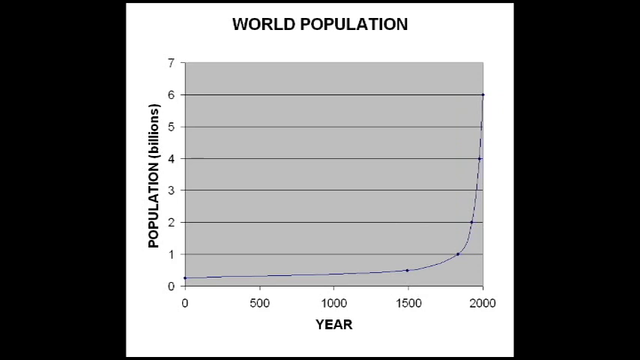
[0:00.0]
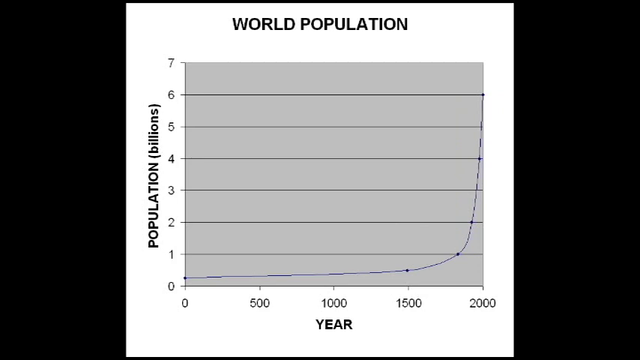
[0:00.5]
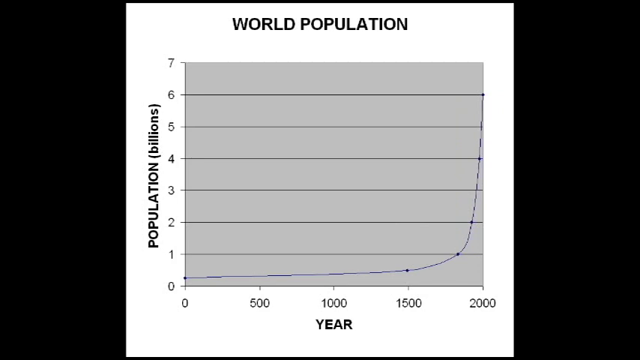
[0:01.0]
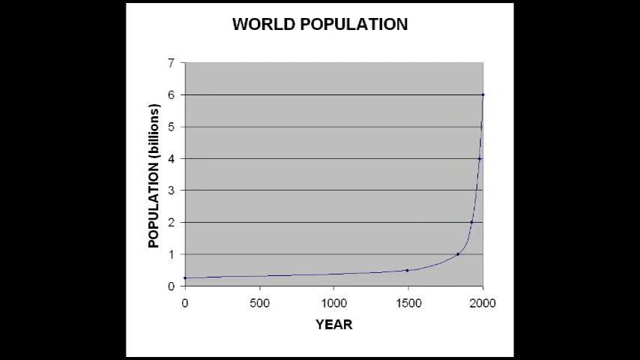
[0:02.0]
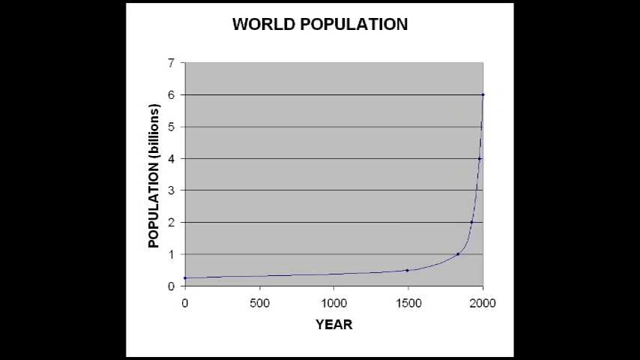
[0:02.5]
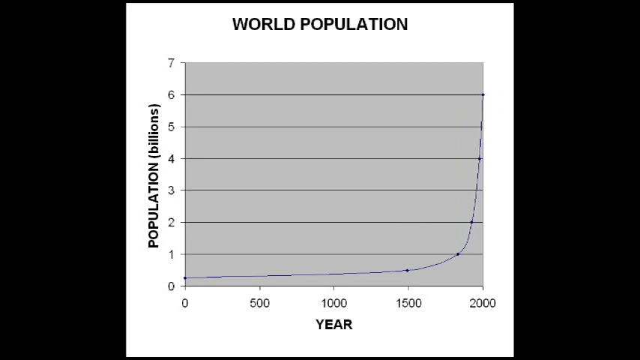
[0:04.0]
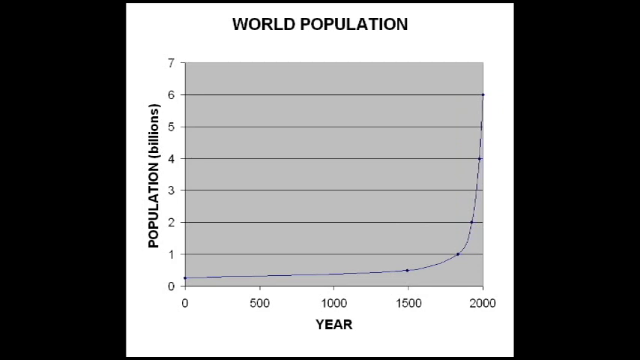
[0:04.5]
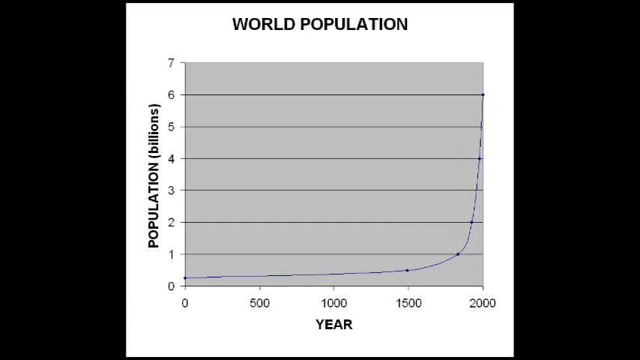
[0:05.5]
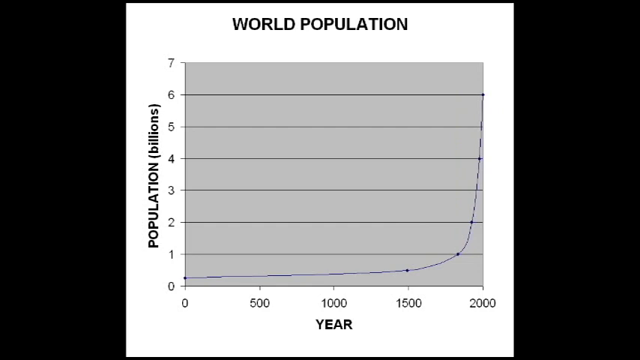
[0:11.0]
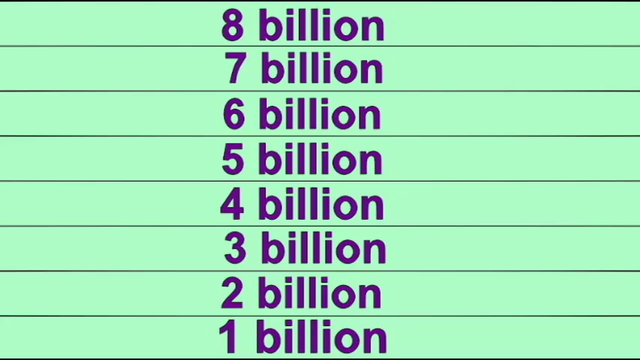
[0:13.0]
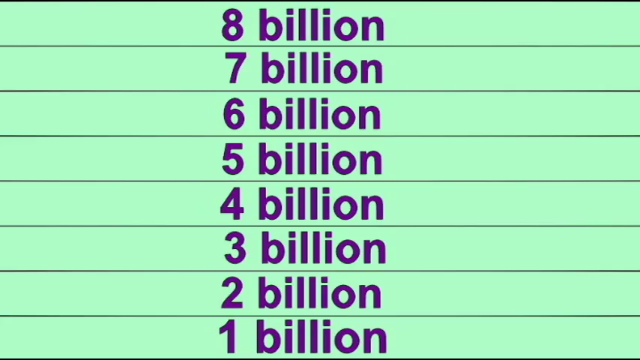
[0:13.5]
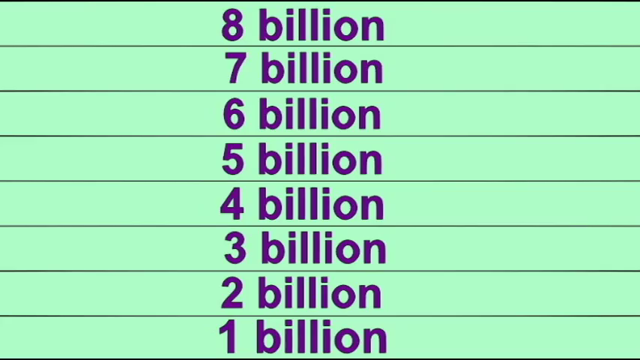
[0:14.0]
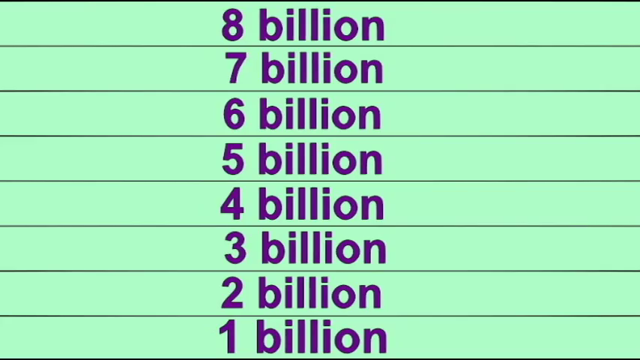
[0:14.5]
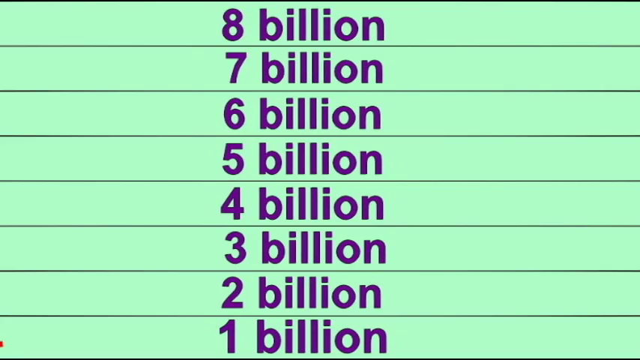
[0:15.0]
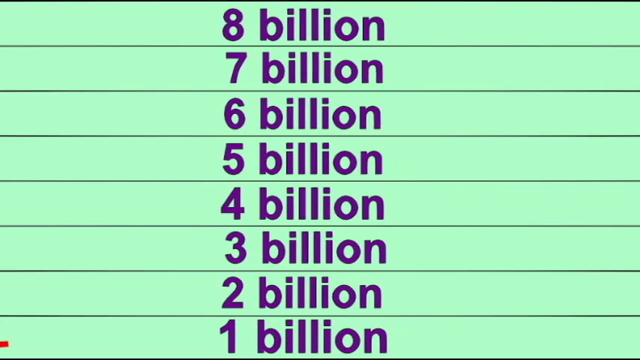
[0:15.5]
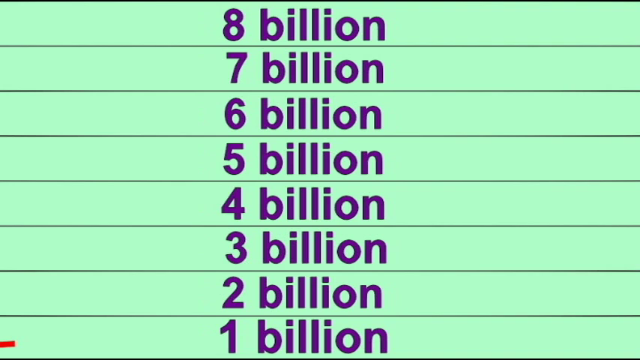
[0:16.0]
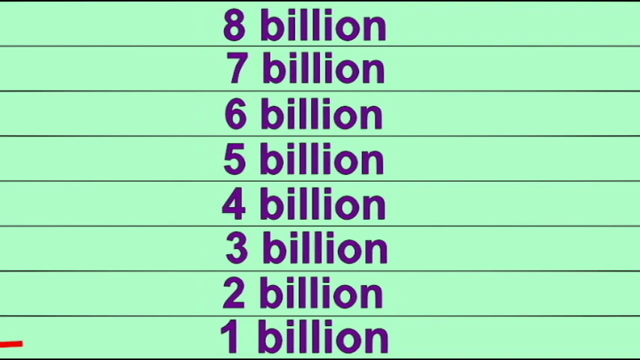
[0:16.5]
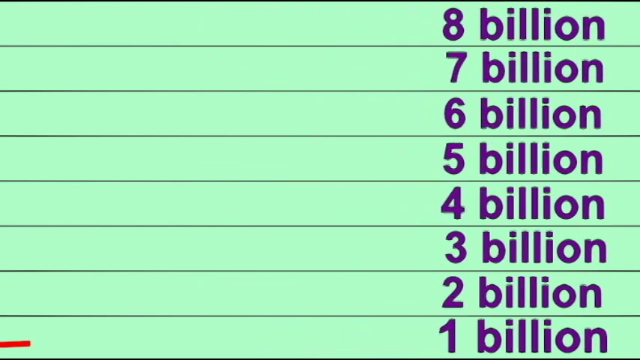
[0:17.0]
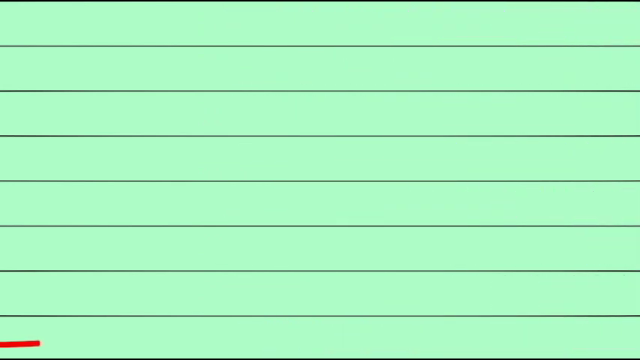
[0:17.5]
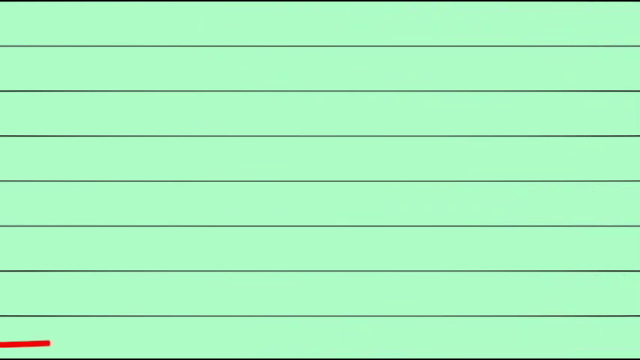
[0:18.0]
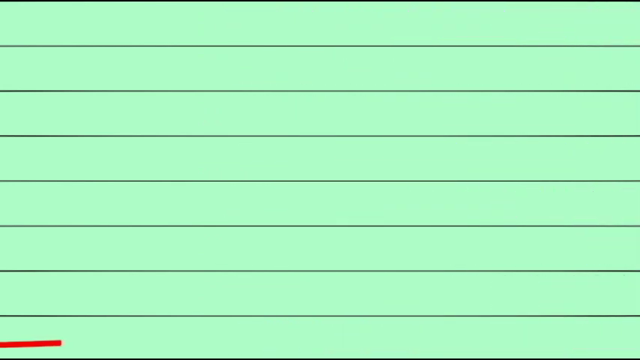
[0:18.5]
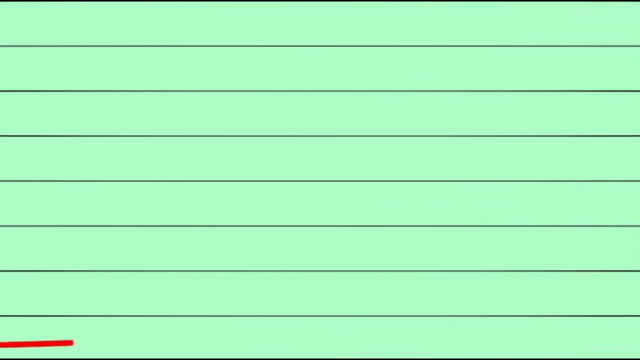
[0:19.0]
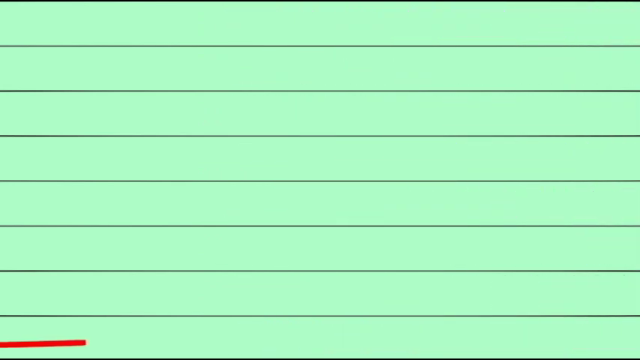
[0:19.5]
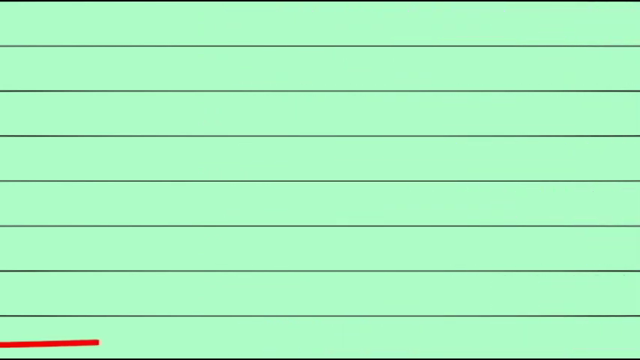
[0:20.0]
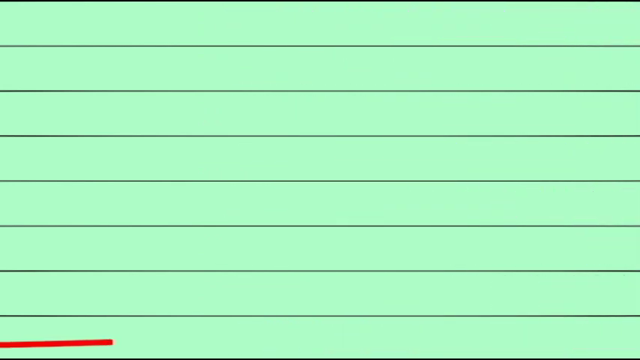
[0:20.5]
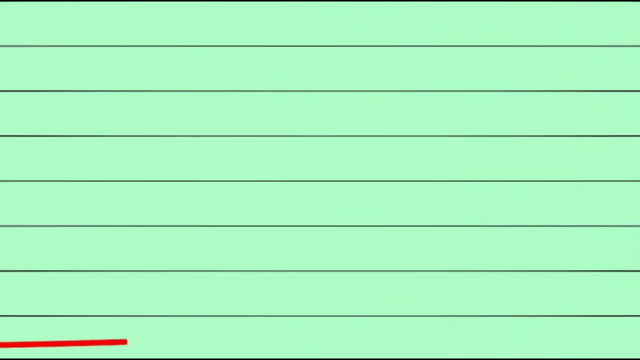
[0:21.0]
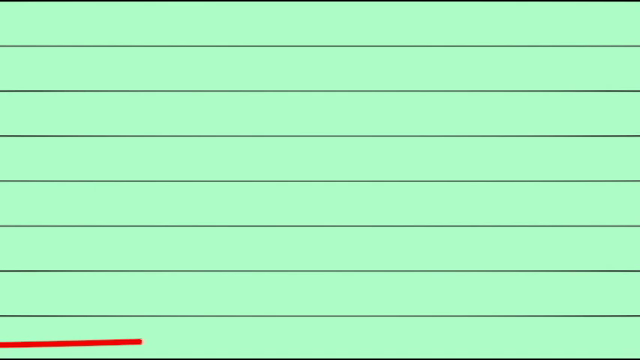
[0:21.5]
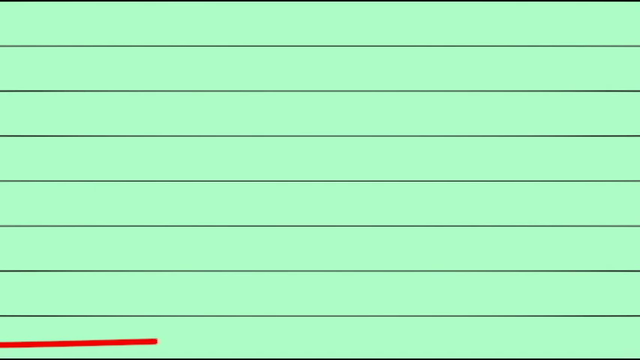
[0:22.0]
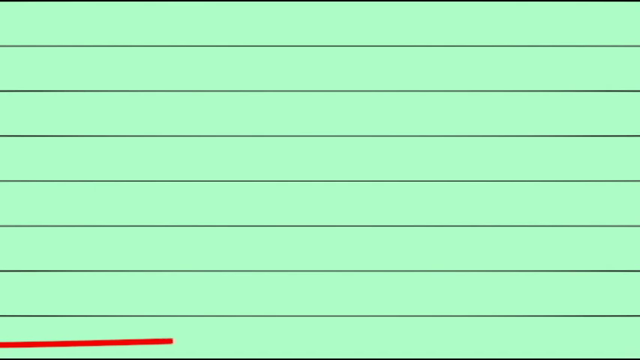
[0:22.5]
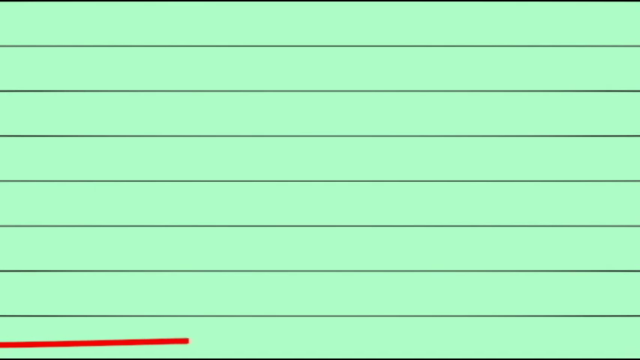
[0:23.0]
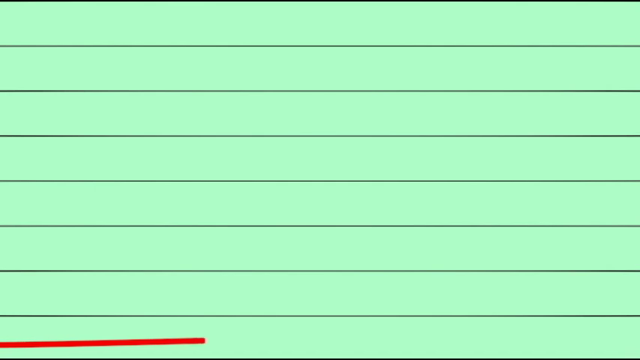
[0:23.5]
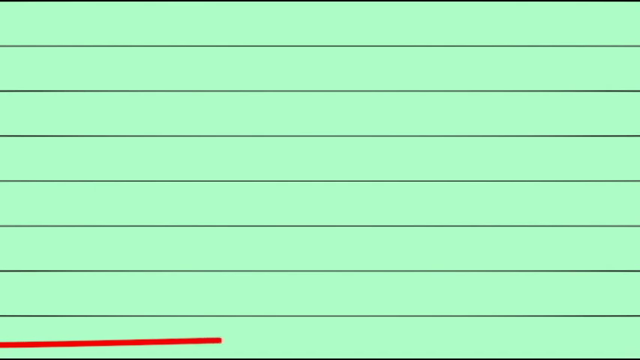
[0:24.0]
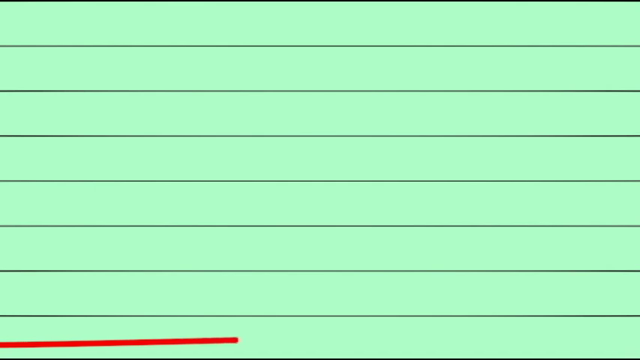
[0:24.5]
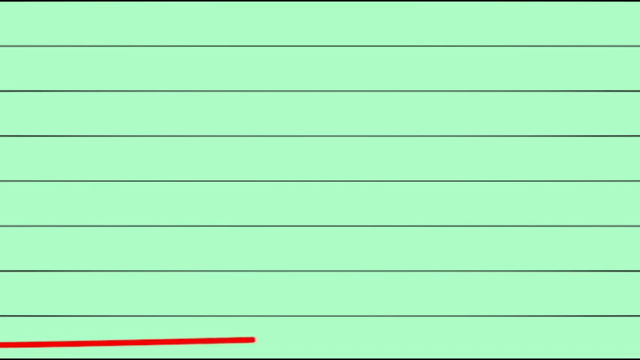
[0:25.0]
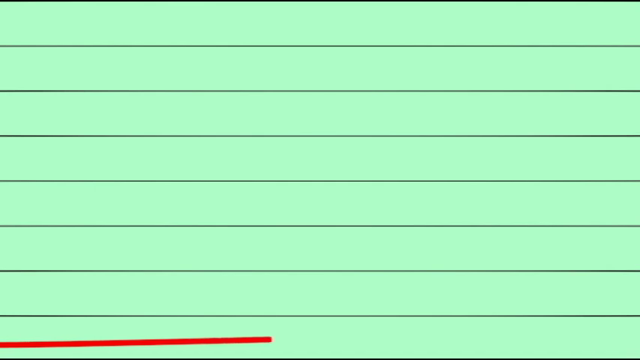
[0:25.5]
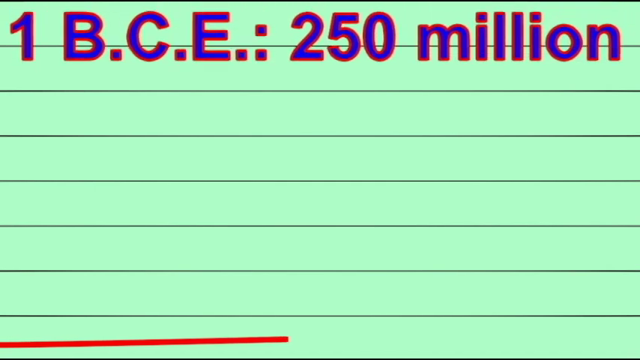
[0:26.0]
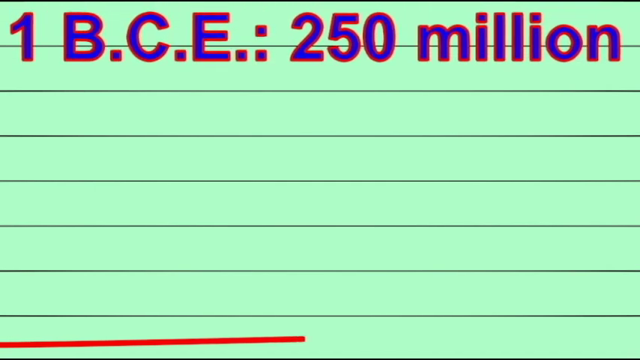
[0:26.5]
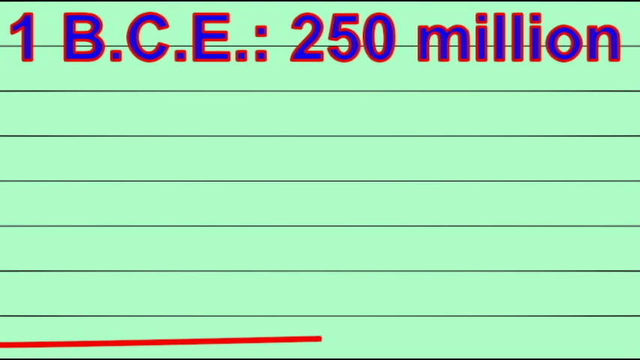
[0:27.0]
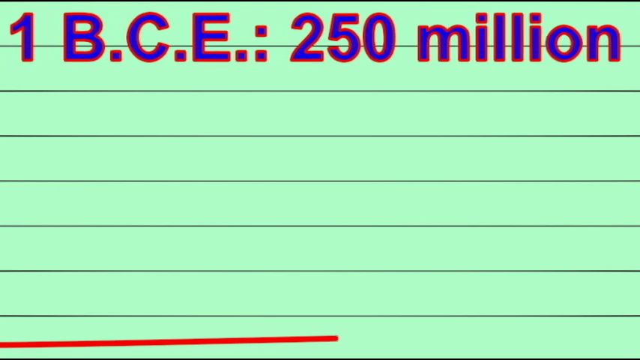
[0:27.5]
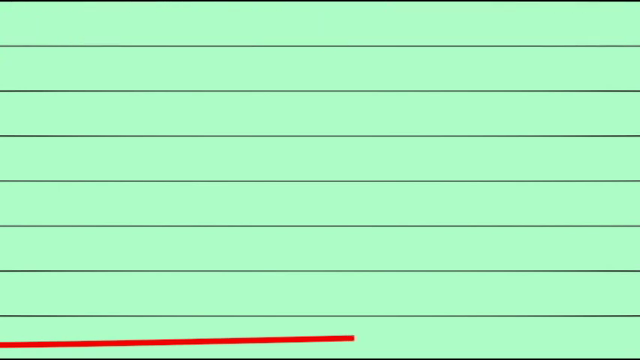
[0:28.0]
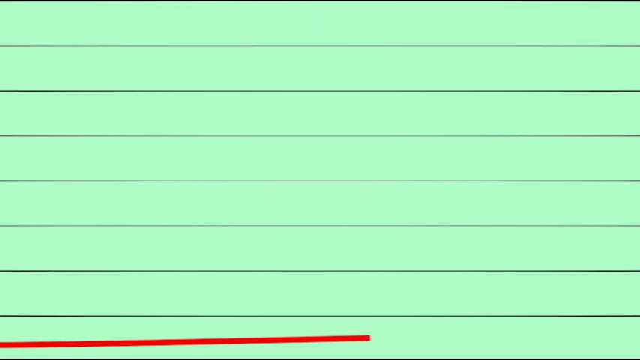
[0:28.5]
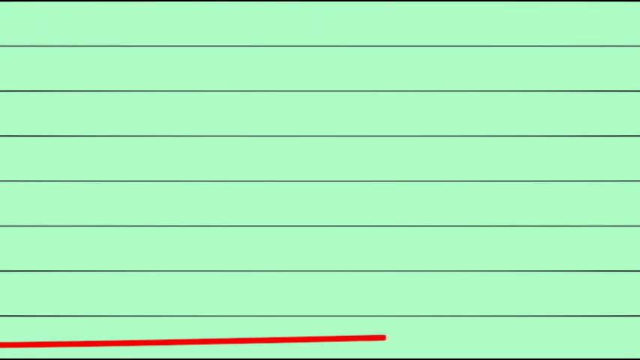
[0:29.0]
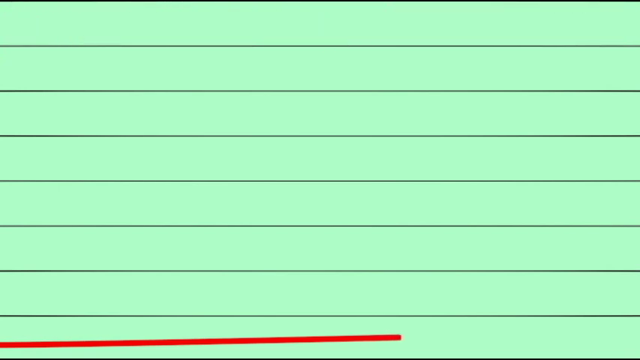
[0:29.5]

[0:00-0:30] A chart with a line appears, with text indicating it shows "world population." The bottom axis is marked 0, 500, 1000, 1500 and 2000, and the vertical axis on the left is labeled population in billions, running from 0 to 7. The line rises, and between 1500 and 2000 it goes almost straight up. Next comes something that almost looks like an Excel spreadsheet: it is turquoise with purple font, and each line is labeled 1 billion, 2, 3, 4, 5, 6, 7 and 8, with "billion" written out. The paper-like image then goes blank, and text appears right over the line: "1 BCE" and "250 million."